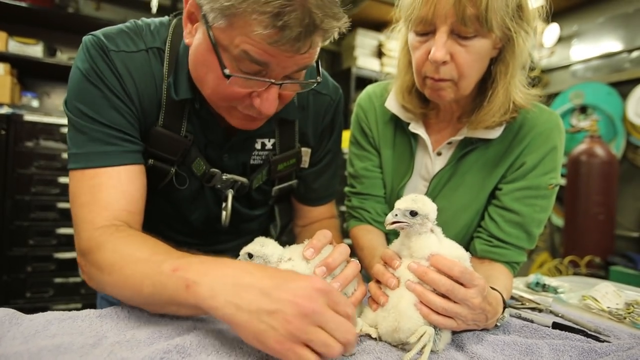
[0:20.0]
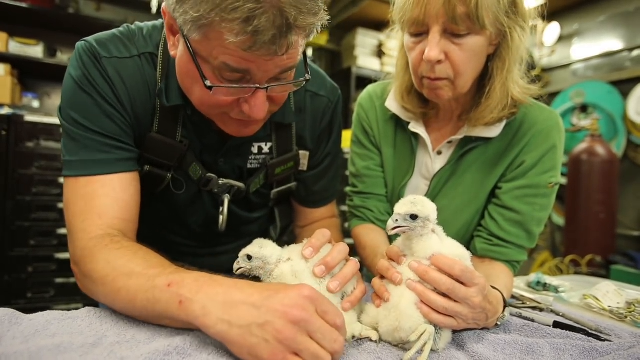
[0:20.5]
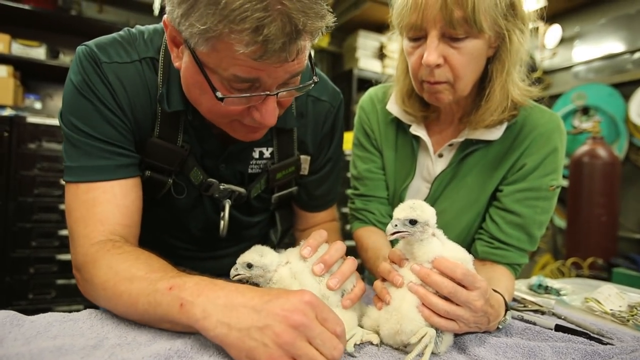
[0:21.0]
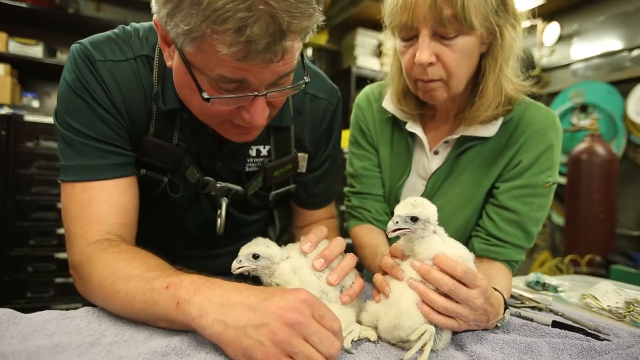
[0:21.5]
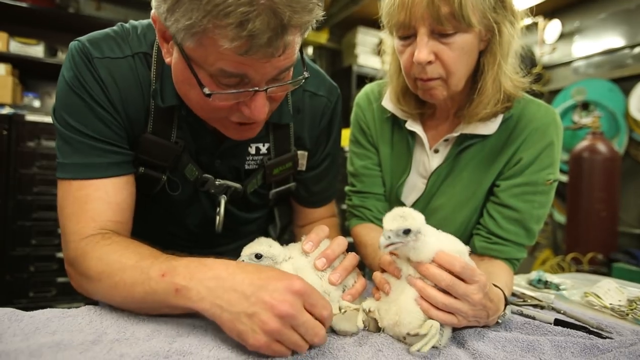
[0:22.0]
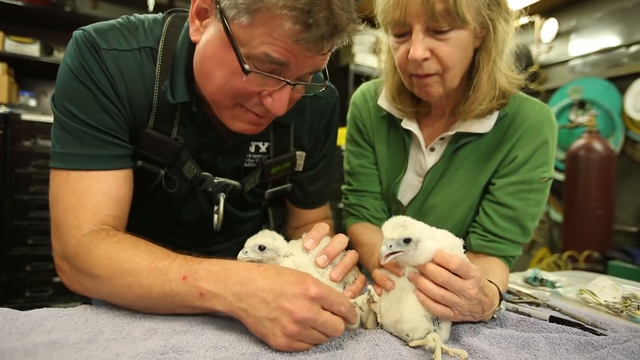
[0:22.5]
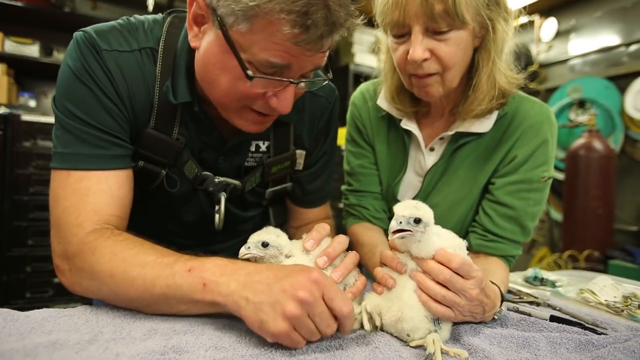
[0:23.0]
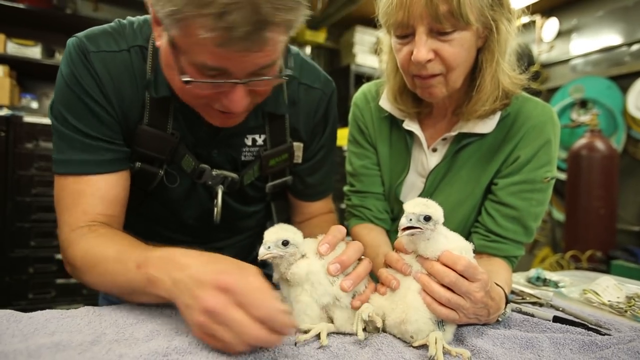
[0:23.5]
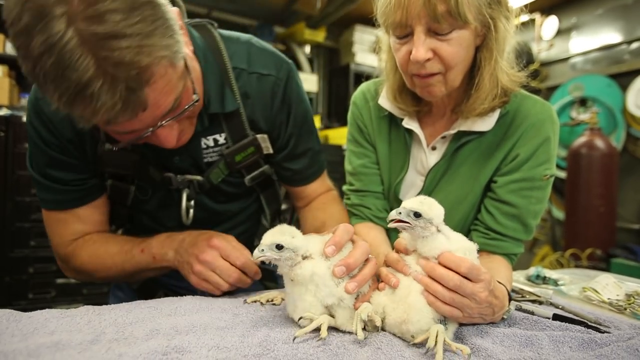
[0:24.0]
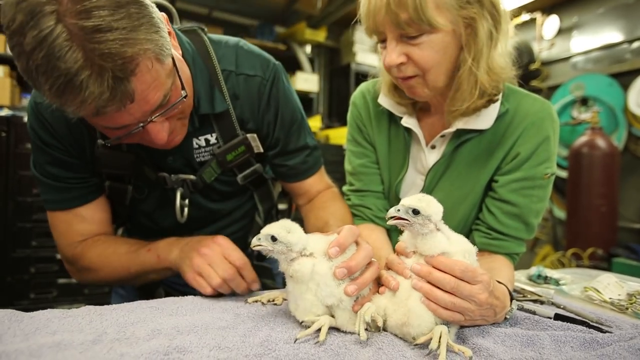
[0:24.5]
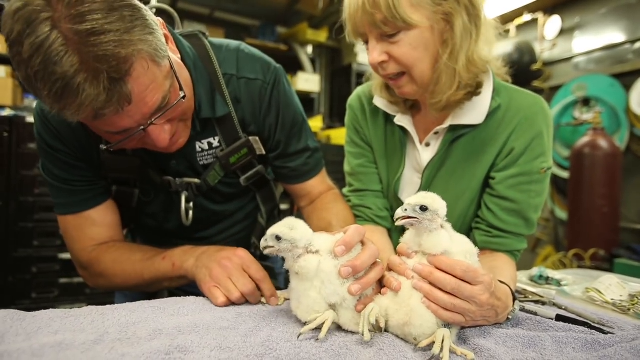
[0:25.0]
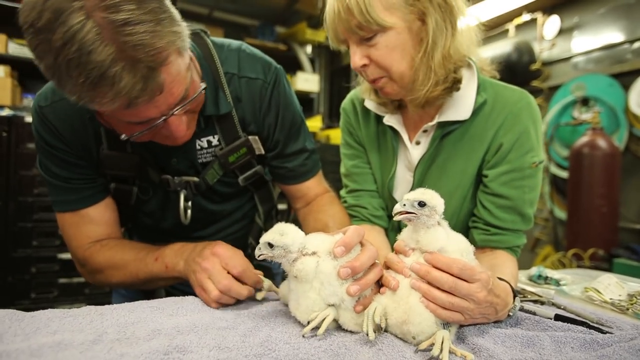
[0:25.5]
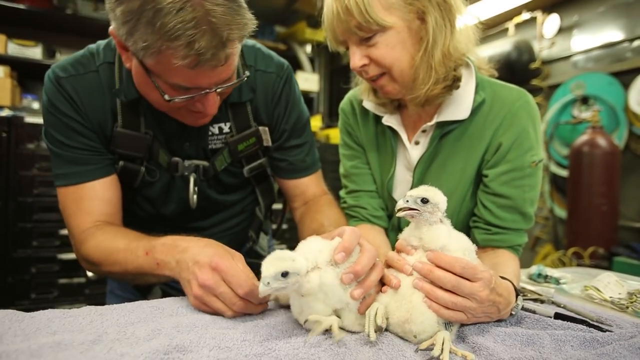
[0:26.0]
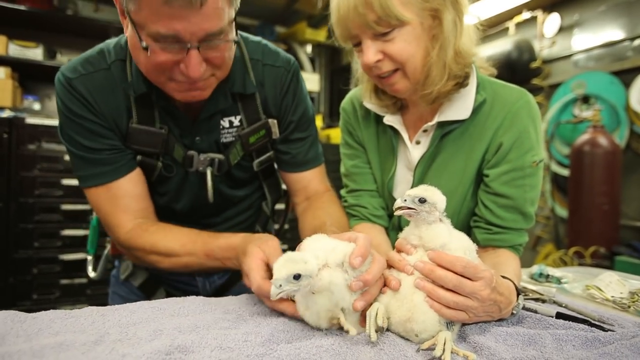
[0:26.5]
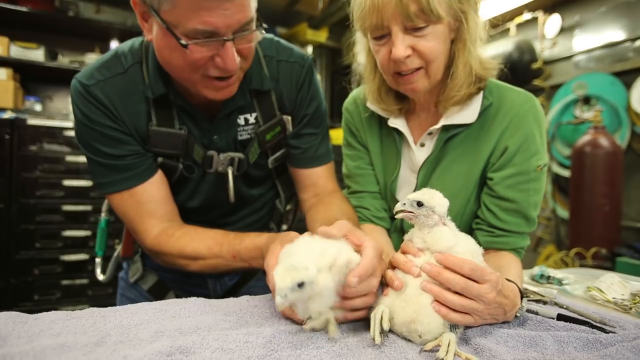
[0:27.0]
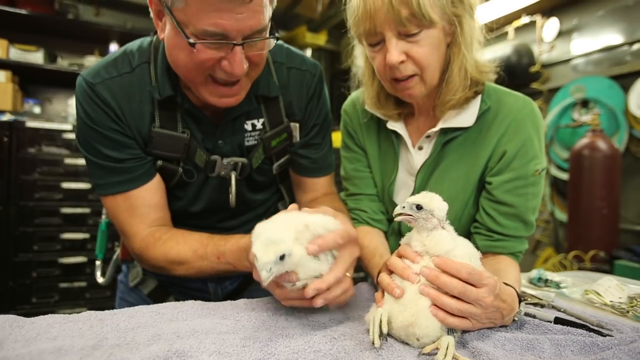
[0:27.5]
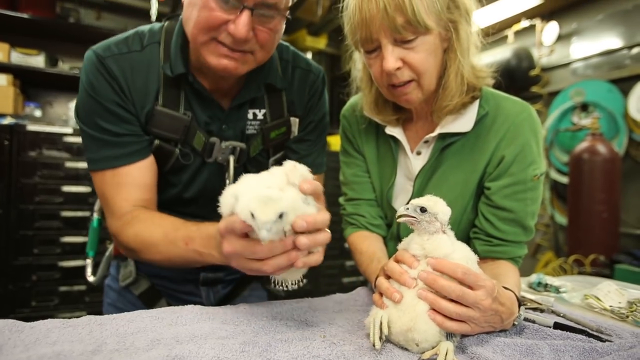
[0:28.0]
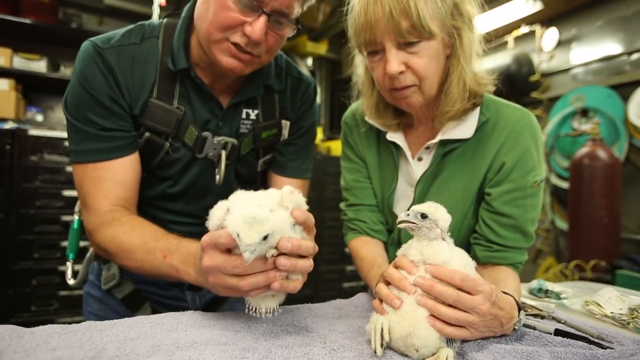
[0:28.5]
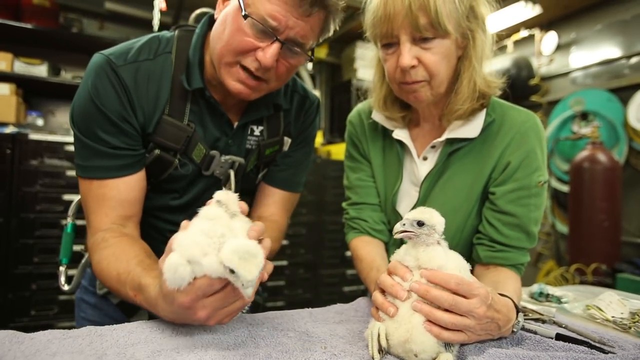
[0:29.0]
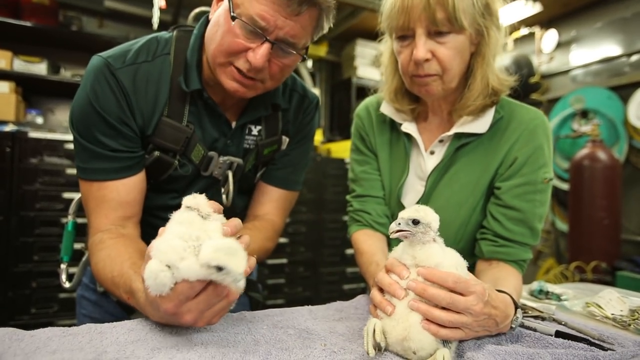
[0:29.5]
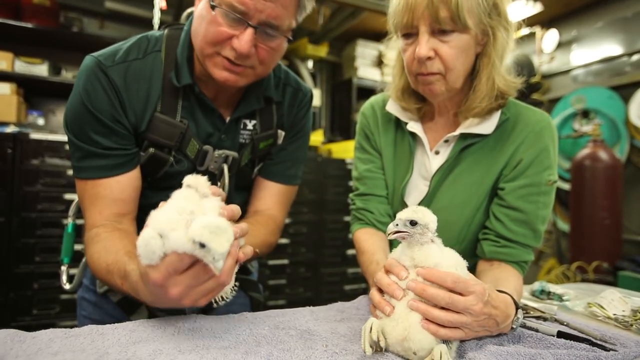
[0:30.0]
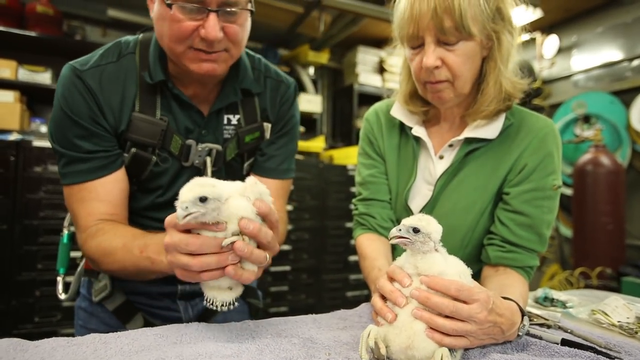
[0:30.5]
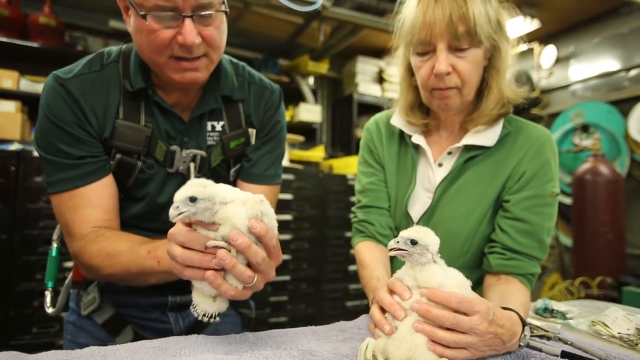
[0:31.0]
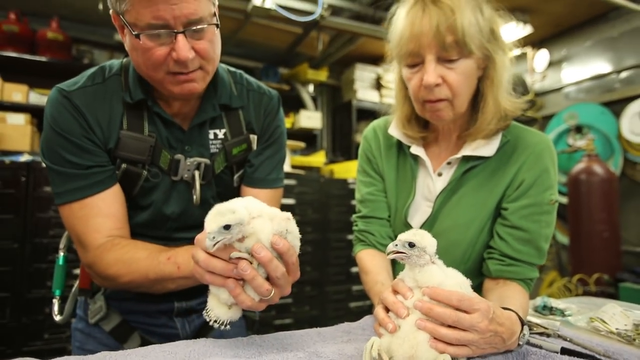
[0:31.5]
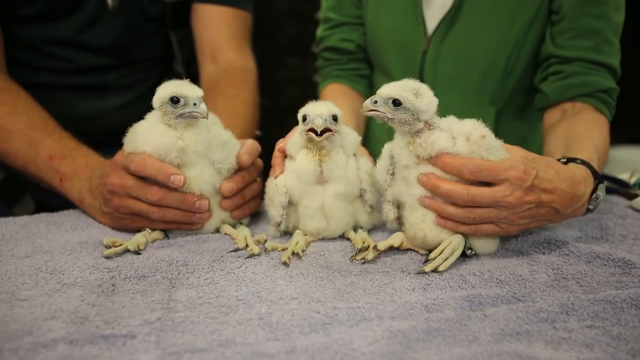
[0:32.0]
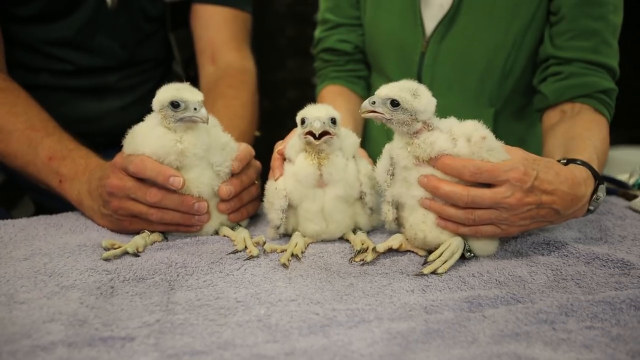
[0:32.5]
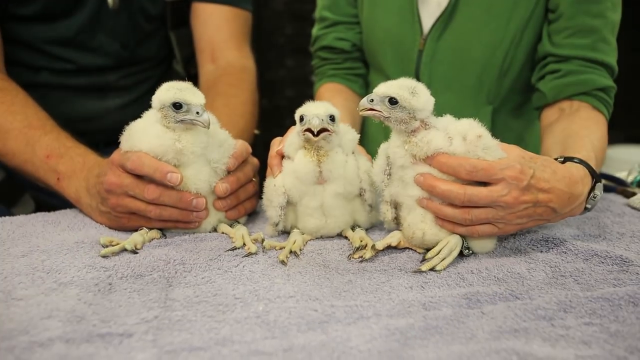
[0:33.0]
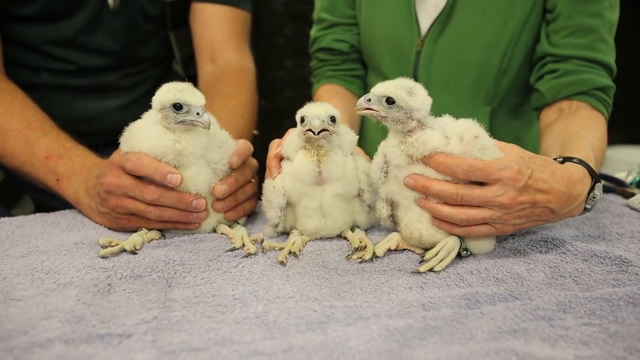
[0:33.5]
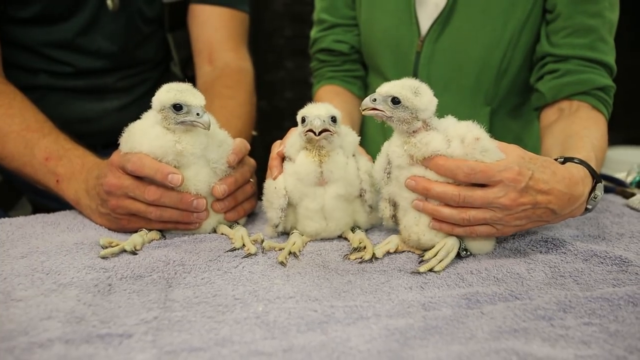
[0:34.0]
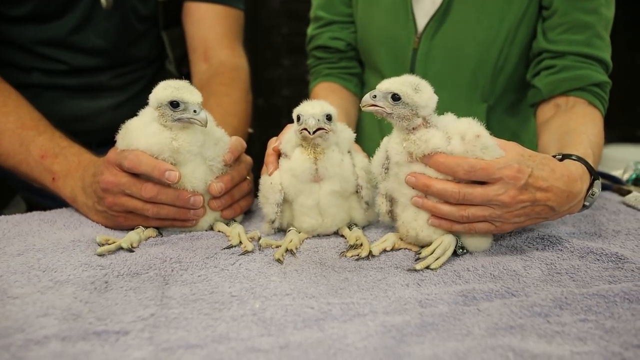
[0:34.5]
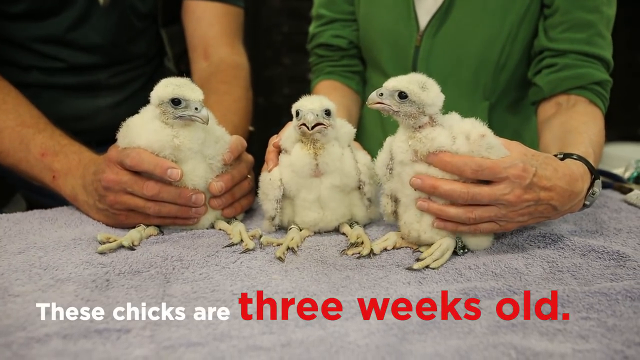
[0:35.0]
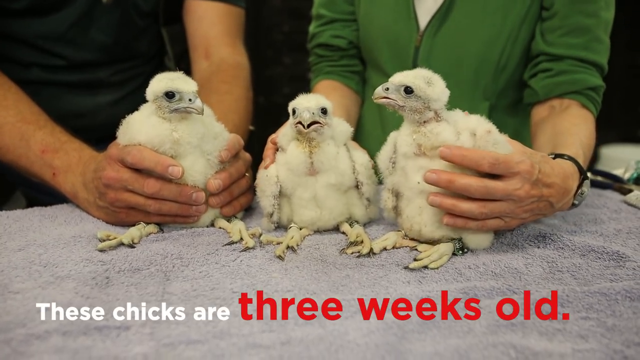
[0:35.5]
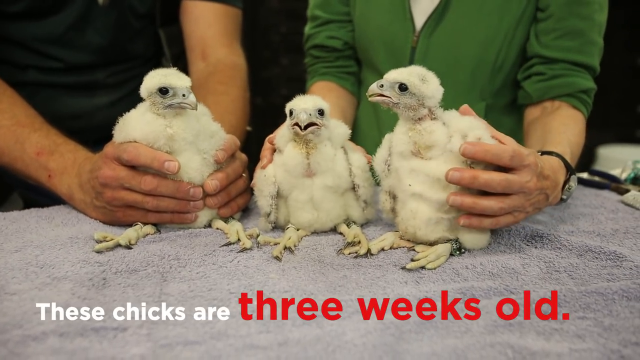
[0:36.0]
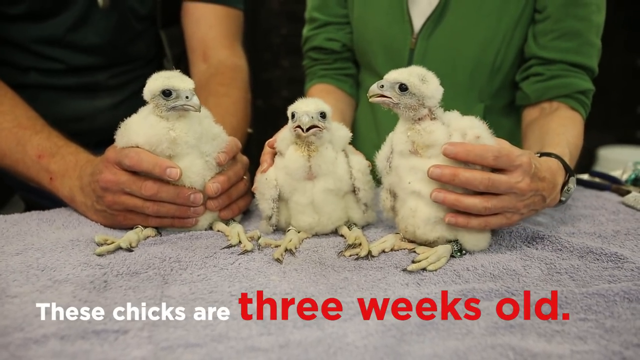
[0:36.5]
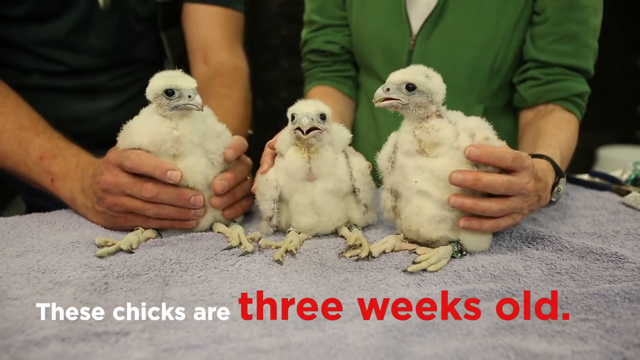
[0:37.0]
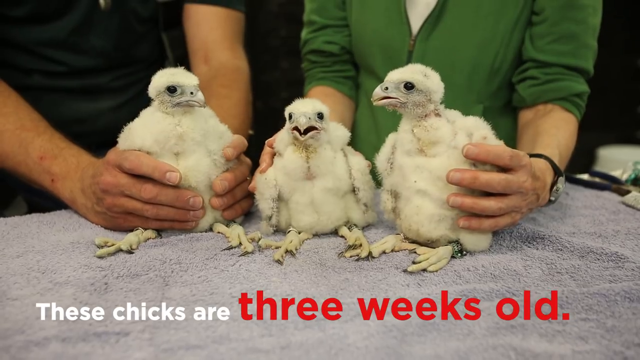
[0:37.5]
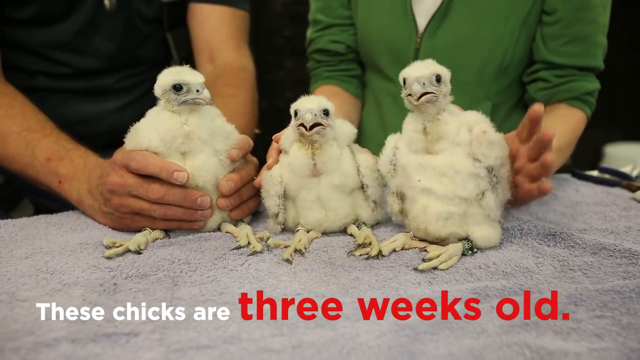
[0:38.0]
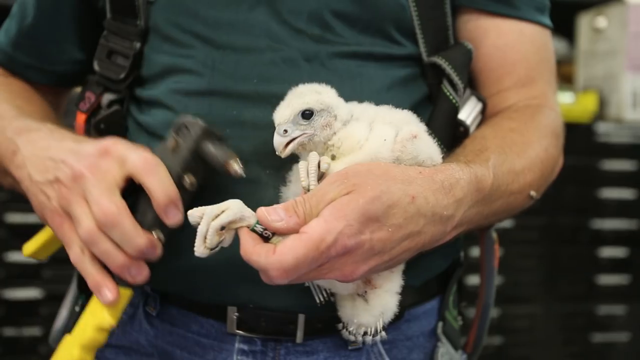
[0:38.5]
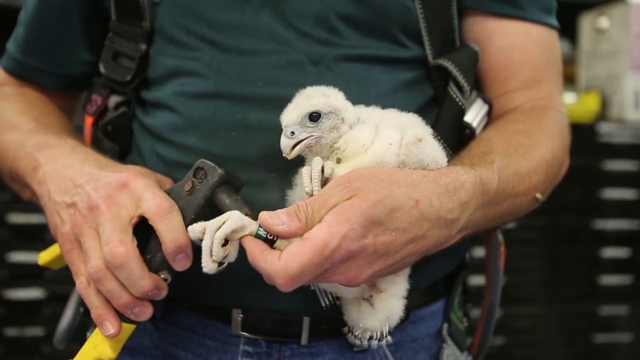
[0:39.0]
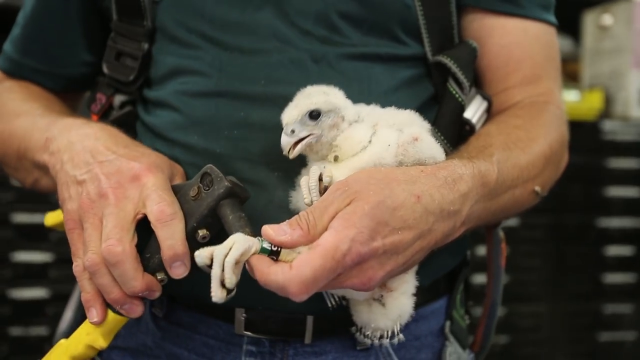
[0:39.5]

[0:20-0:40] A woman on the right and a man on the left each lean over a table with two peregrine falcon chicks on it. Both chicks are white and have downy fluff instead of feathers, and each person holds their hands around one chick. The man uses his right hand to examine his chick: he looks around to the front of it and touches one of its talons, then looks at the second talon with his right hand while holding the chick down with his left. The woman holds her chick with both hands and watches what the man is doing, and the two talk to each other. Finally the man picks up the chick in both hands and turns it around so he can see both sides of it. Next, three white peregrine falcon chicks are seated on a light blue towel. Behind the two on the right, a woman holds one in each hand, and a man on the left holds the third with two hands. Text at the bottom of the screen states that these chicks are three weeks old. Then someone is shown only from the shoulder down, using a black instrument in his right hand to put a tag on one of the chick's legs.